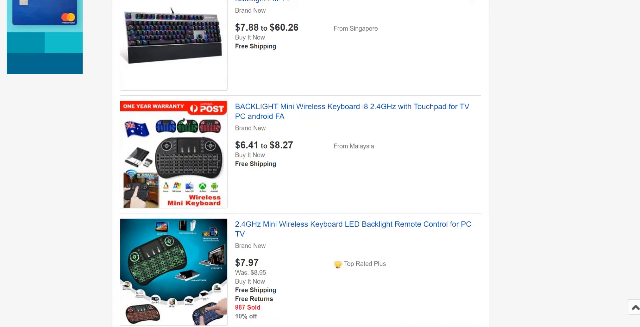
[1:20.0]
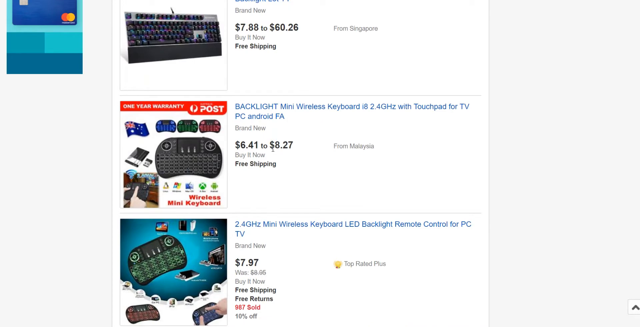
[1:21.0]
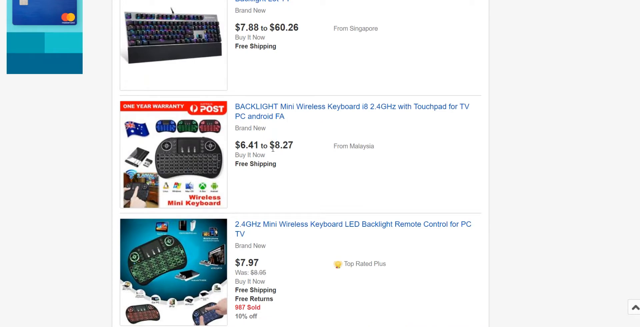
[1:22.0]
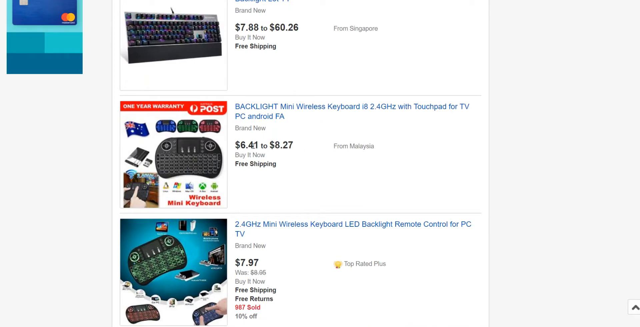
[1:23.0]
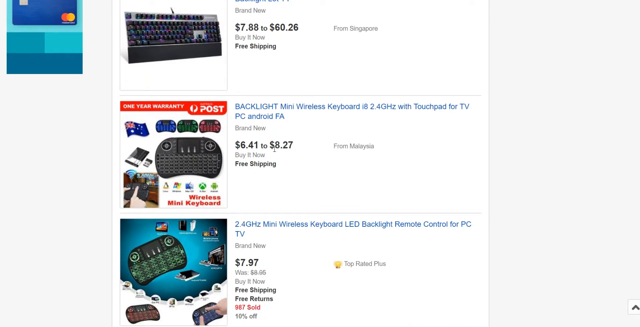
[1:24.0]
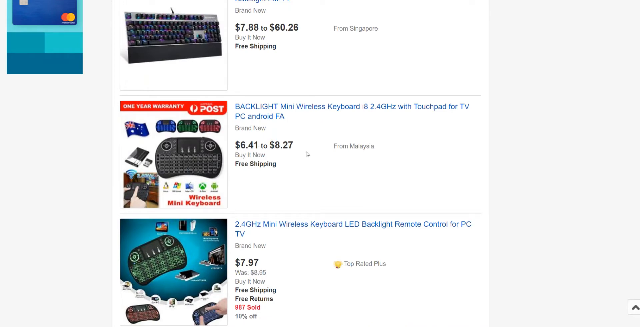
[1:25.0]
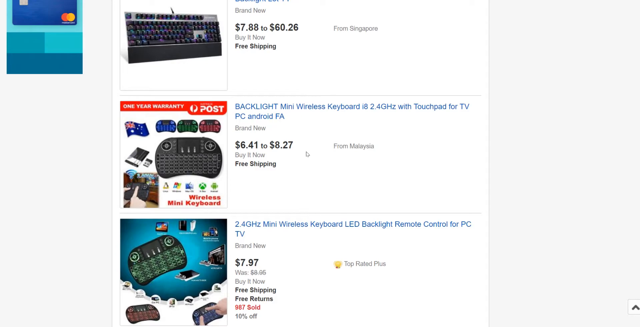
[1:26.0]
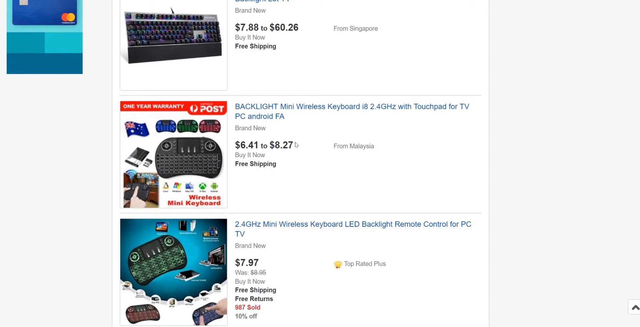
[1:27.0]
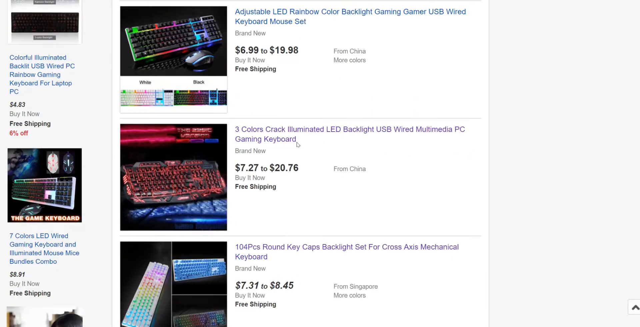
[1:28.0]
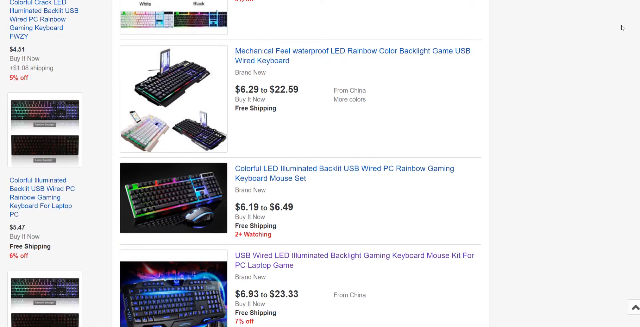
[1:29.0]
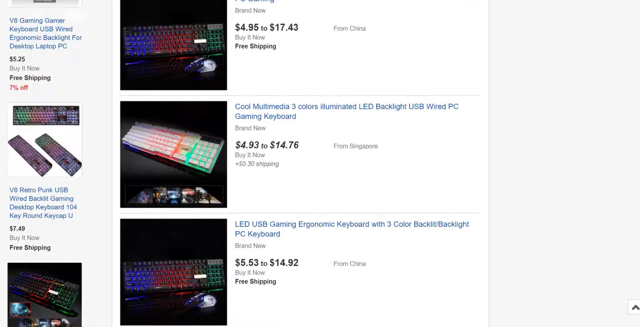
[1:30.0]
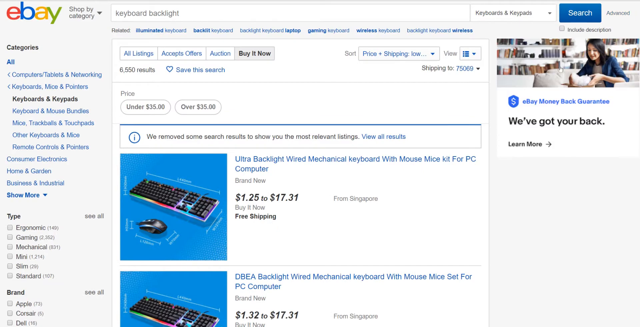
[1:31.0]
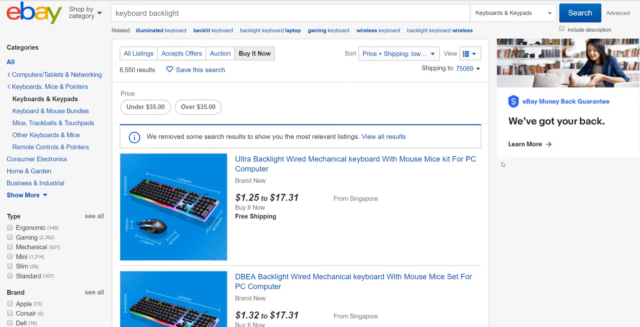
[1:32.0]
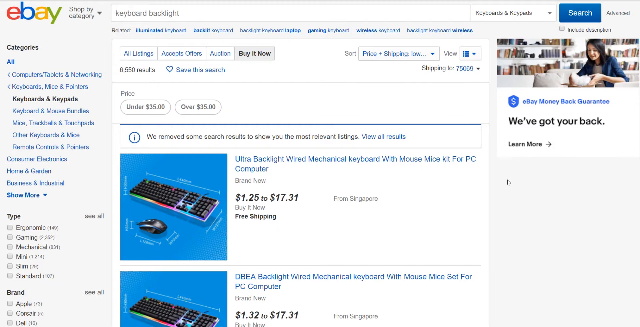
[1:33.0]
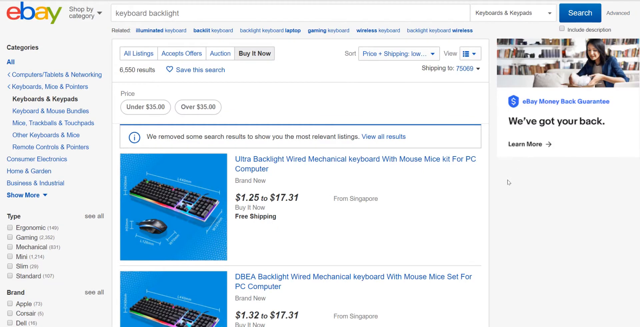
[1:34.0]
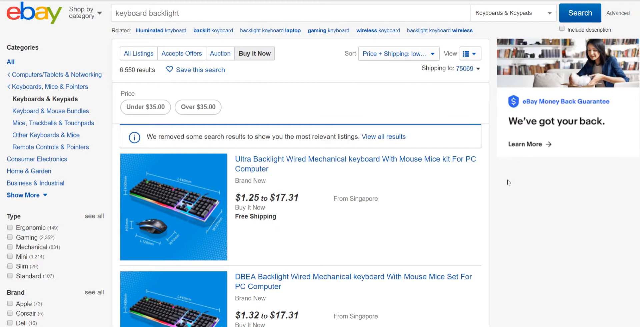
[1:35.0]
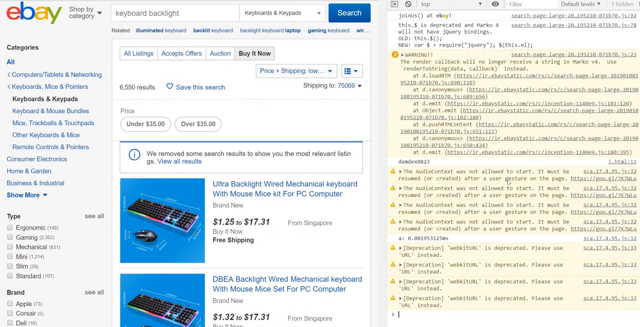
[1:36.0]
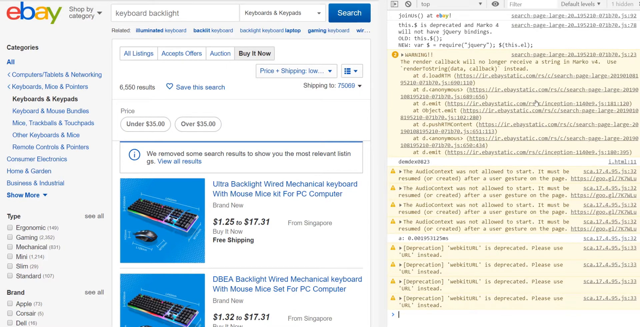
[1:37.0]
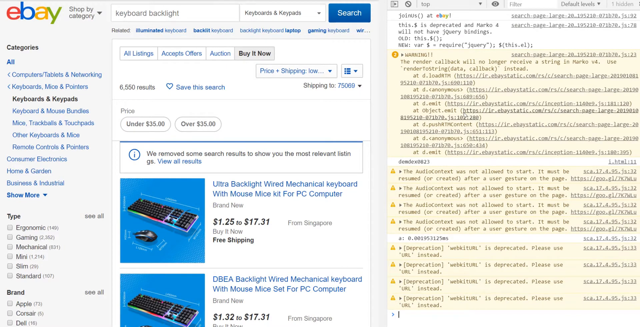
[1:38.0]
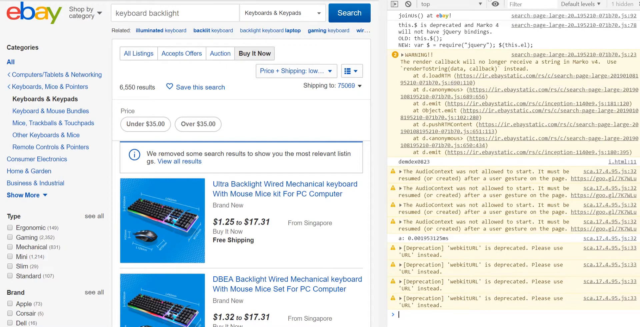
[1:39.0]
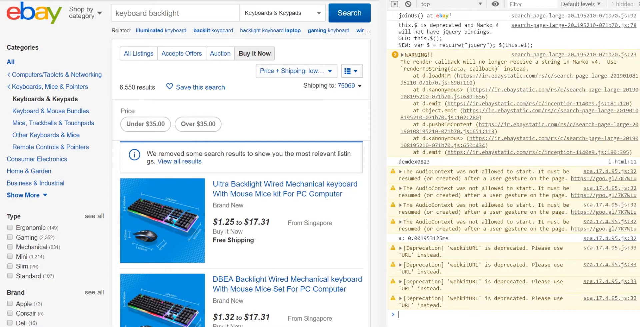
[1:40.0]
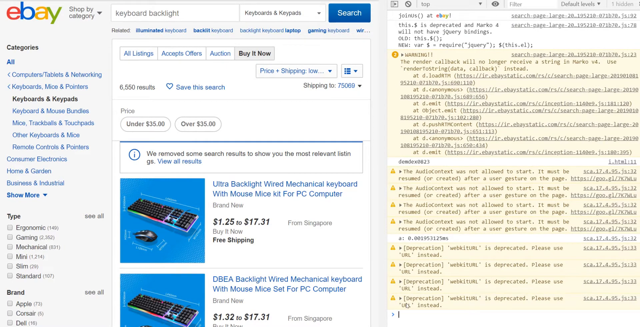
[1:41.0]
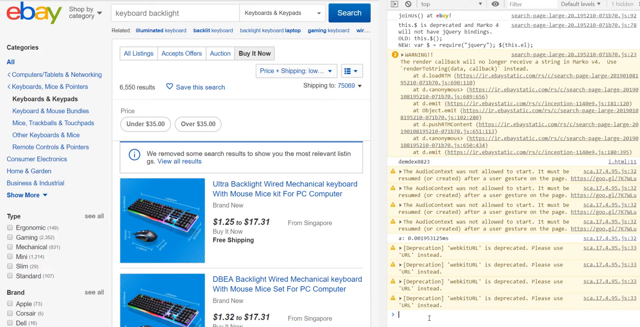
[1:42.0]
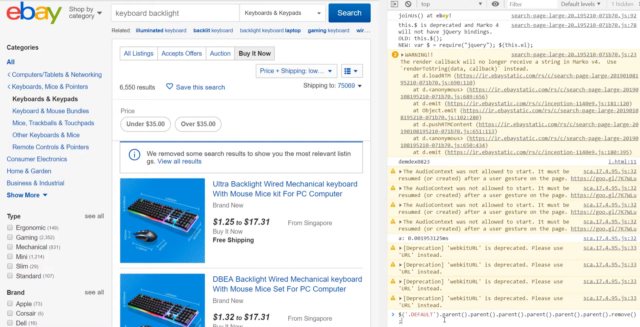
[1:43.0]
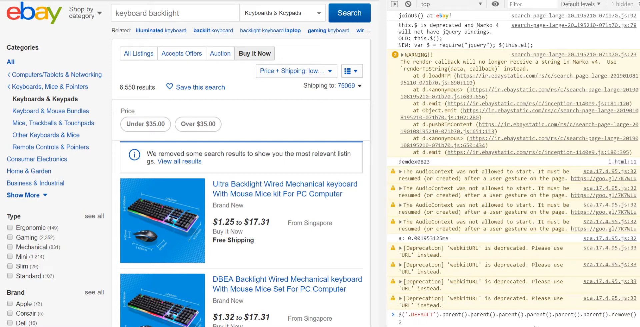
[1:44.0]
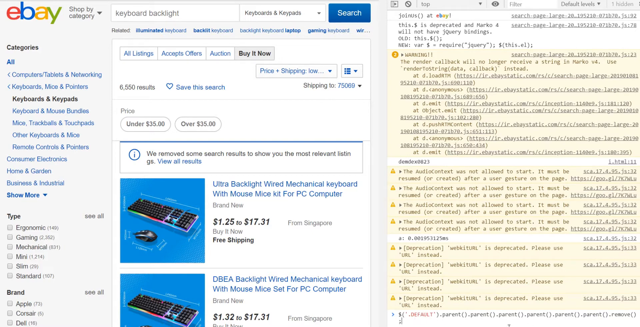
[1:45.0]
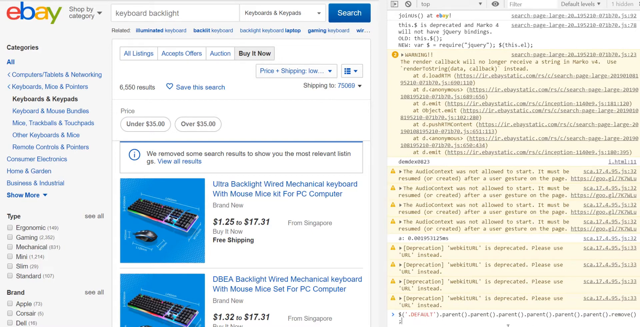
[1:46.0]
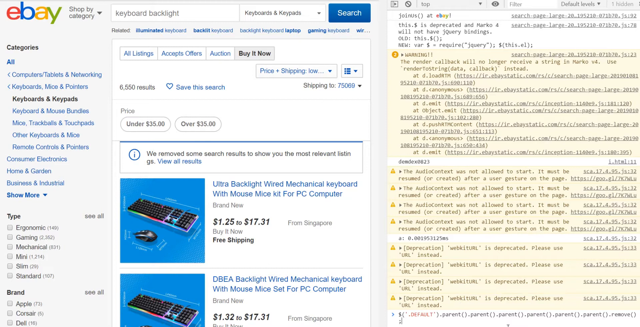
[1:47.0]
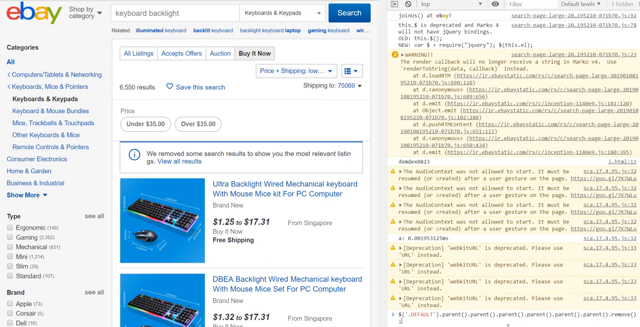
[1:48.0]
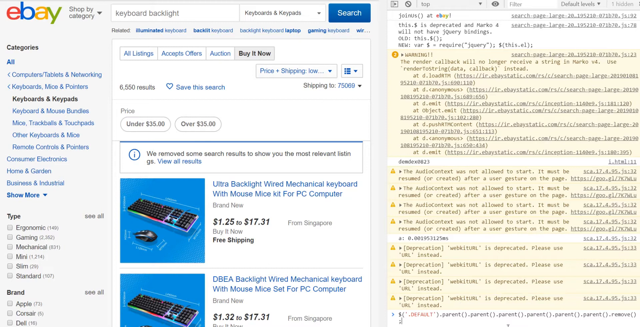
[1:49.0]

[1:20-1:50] Another of the mini keyboards is shown, a little different from the previous one: its image shows all the different colors at the top and a British flag, and it says it is for "TV, PC, Android." The view scrolls back to the top of the screen and the cursor briefly goes to the advanced search, before a window full of code opens, in alternating lines with white and yellow backgrounds. Most of the yellow lines seem to have a yellow triangle on the left side. The window is about the same size as the area holding the listings. The person goes to the bottom and adds another line of code, which looks like it says "default." The purpose of the code is not clear.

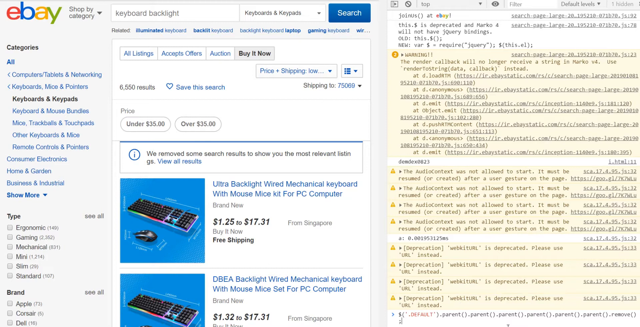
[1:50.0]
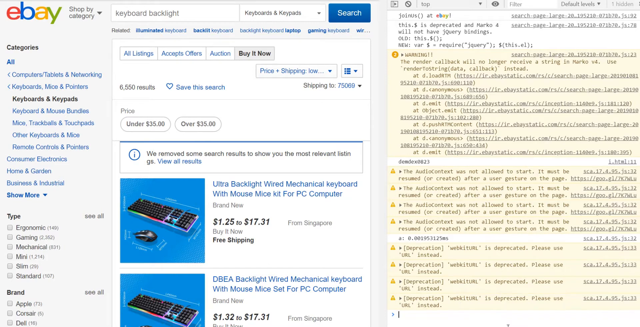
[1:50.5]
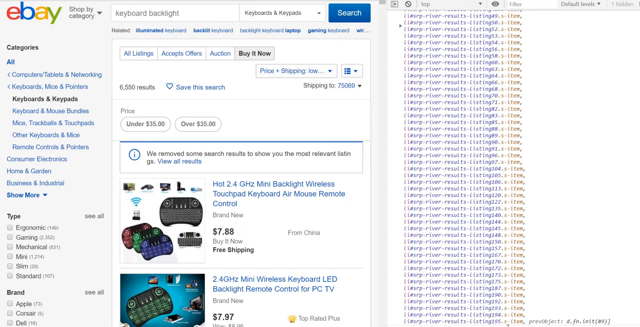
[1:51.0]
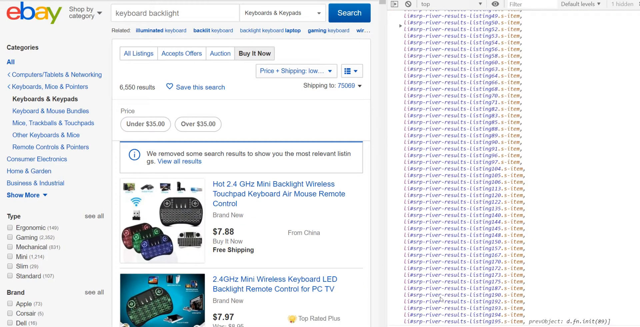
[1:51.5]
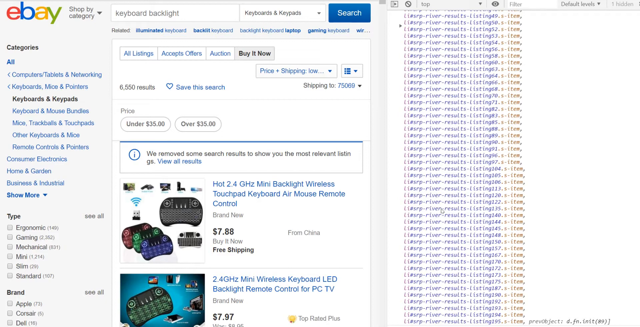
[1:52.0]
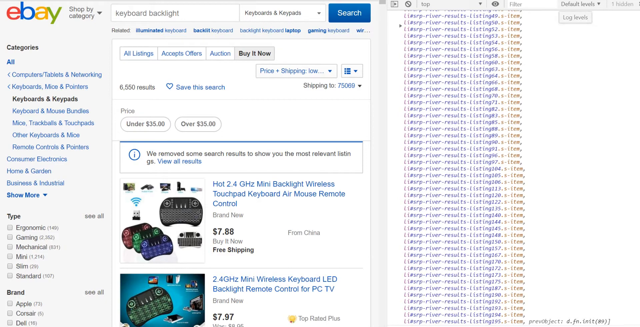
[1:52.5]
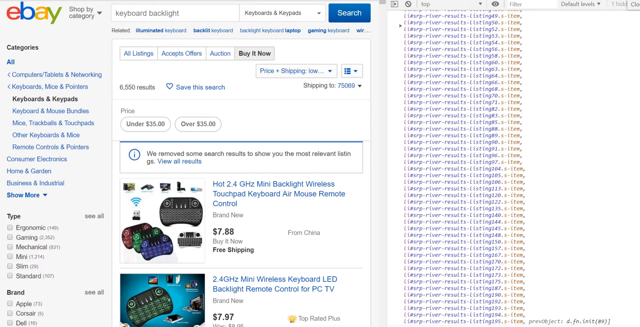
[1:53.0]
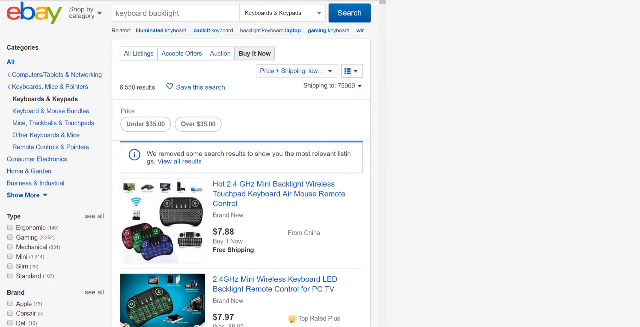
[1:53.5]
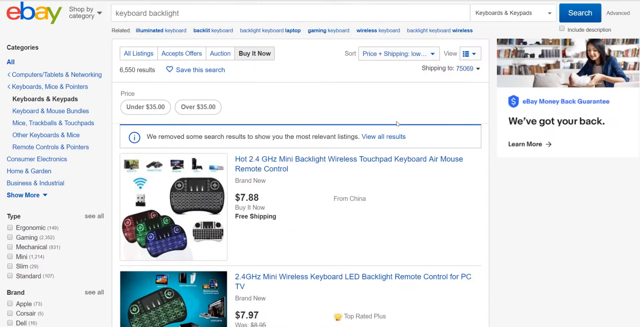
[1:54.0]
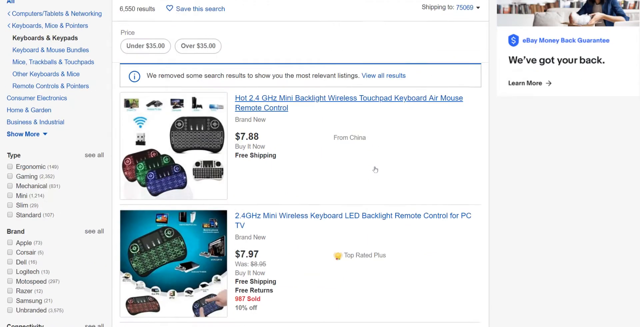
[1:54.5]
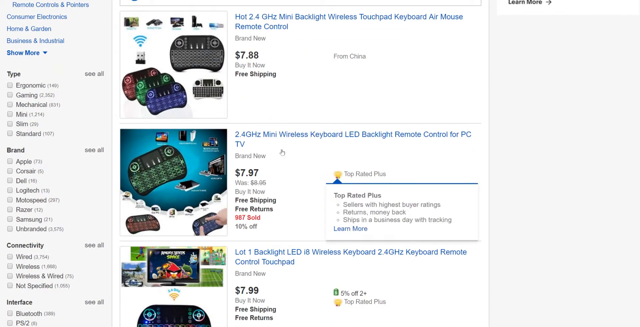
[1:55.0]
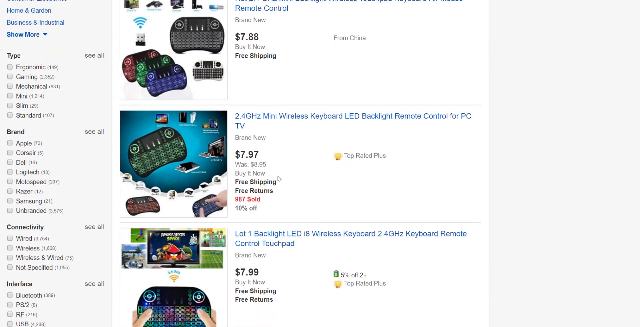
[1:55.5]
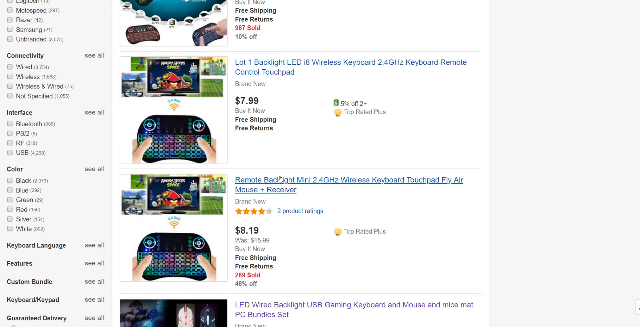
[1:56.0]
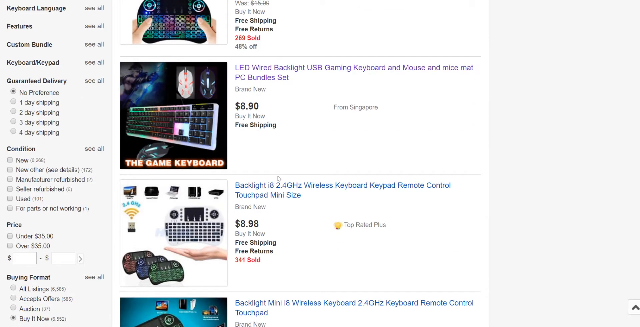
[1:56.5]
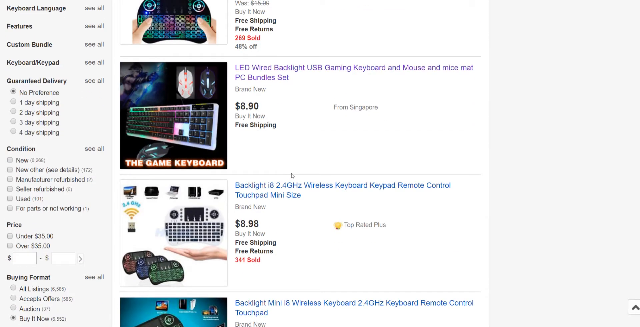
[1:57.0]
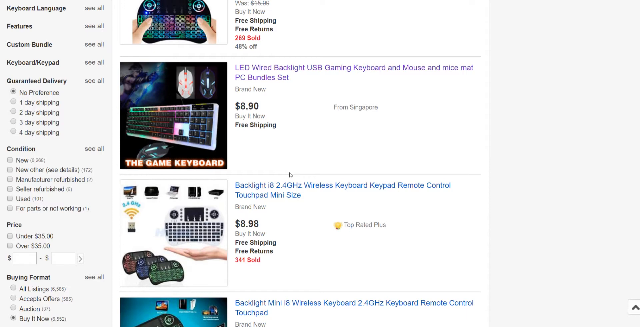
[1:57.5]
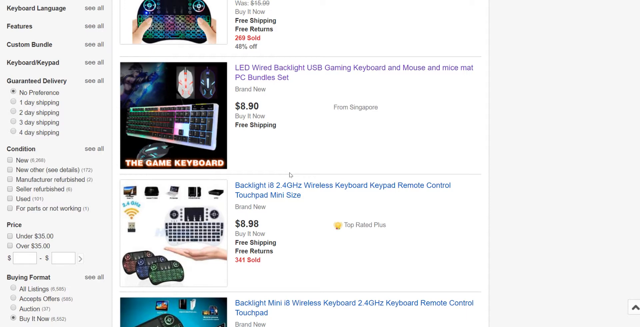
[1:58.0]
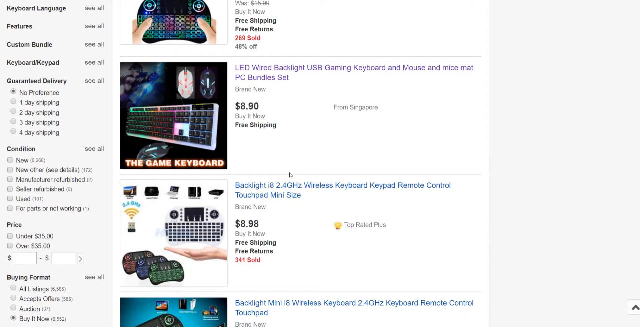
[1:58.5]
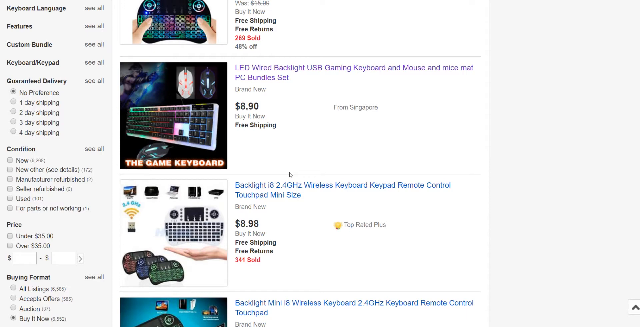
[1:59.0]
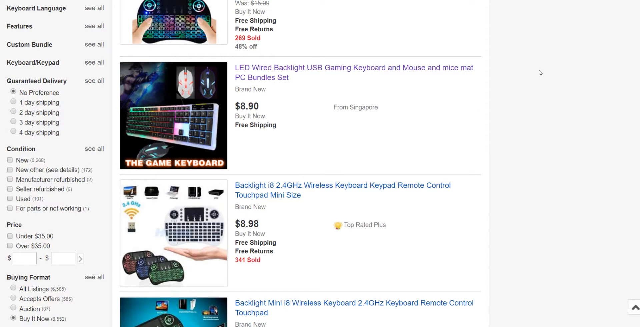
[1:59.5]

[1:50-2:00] All the code now looks similar, mostly blue text with yellow at the end, and almost every line looks exactly the same, including results, listings and the item. The person scrolls down and the listings appear to have changed somewhat: they all appear to be the mini keyboards that resemble game controllers, with one, called a gaming keyboard, having a more traditional size and look. The code appears to have narrowed the kinds of results returned by eBay's search.